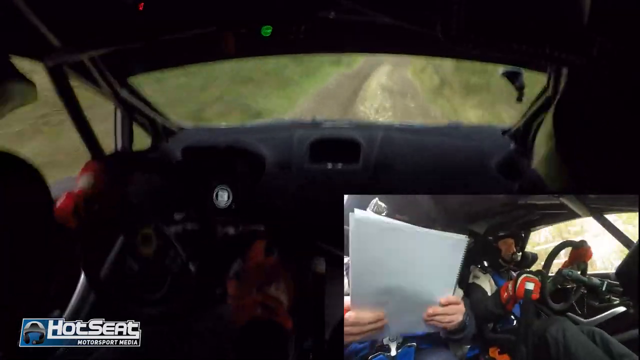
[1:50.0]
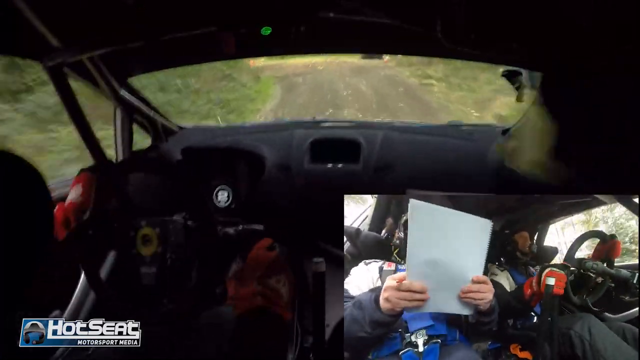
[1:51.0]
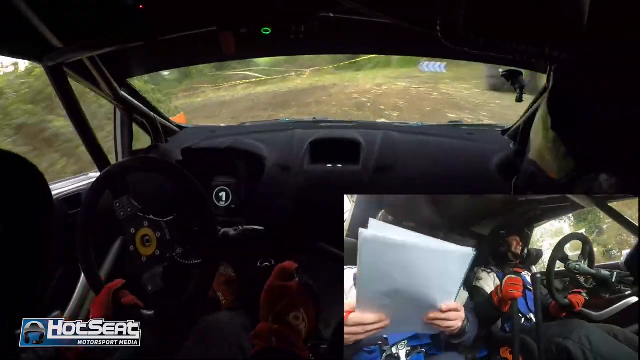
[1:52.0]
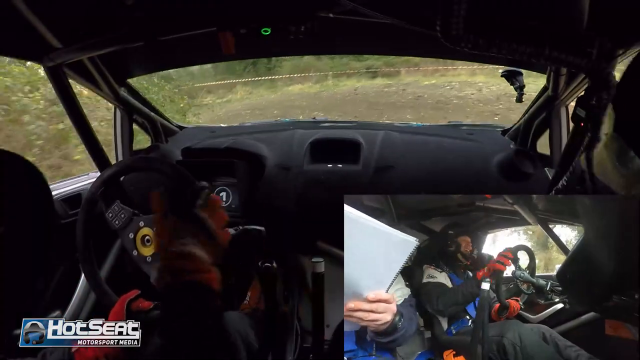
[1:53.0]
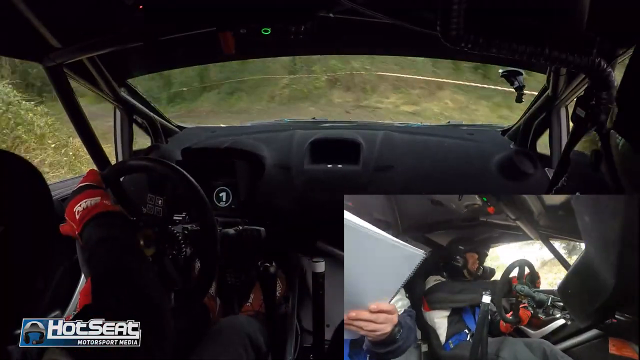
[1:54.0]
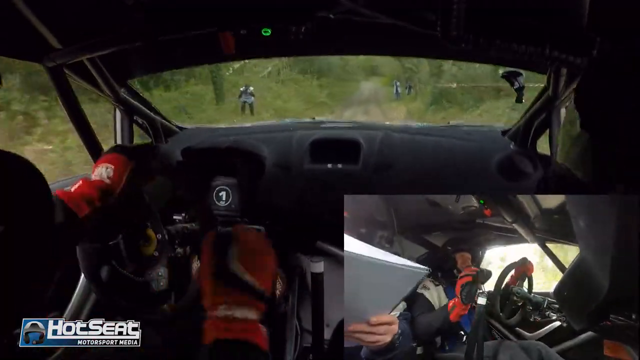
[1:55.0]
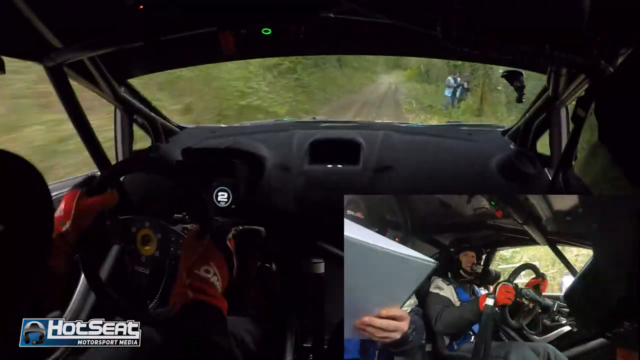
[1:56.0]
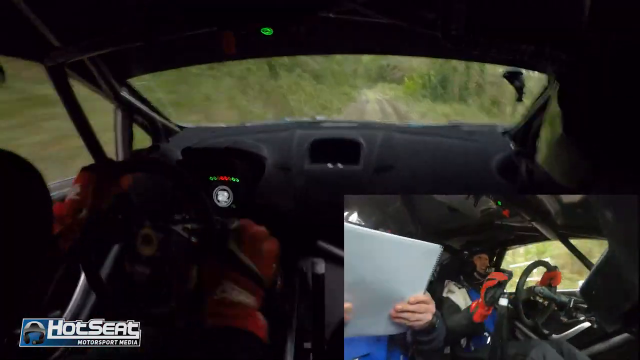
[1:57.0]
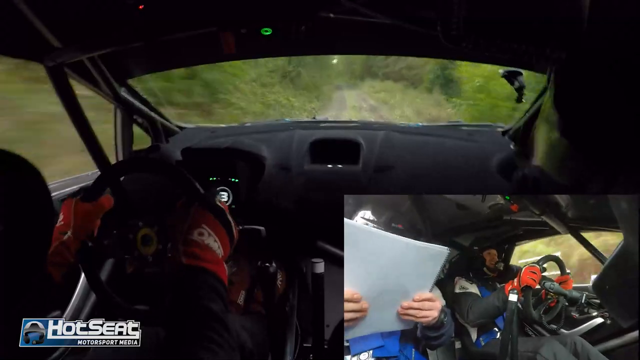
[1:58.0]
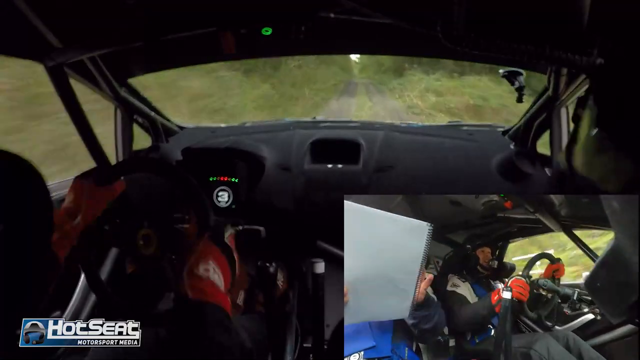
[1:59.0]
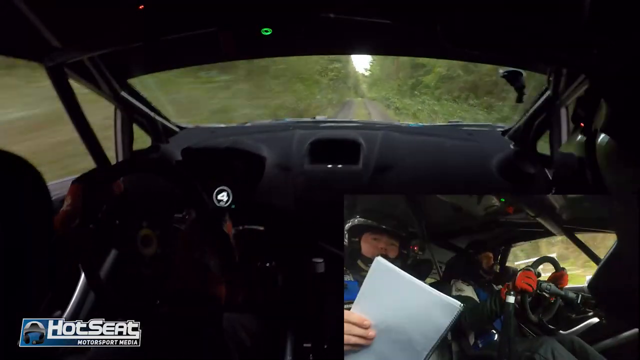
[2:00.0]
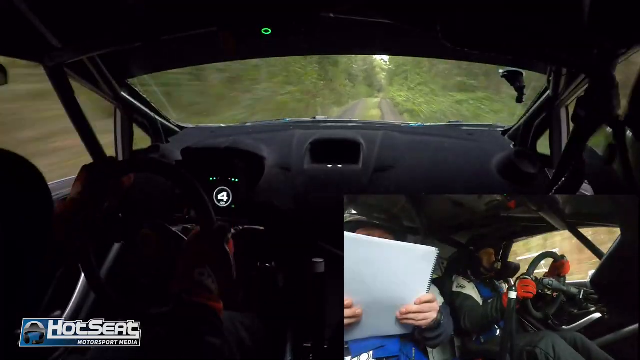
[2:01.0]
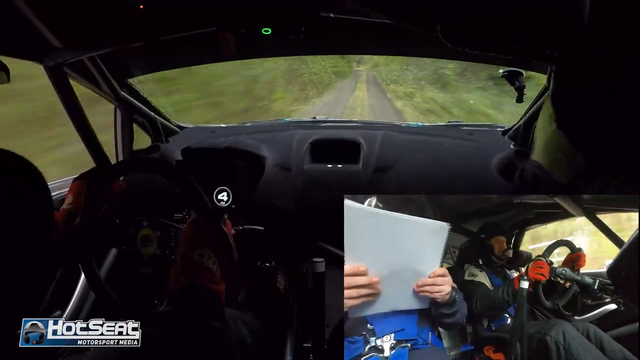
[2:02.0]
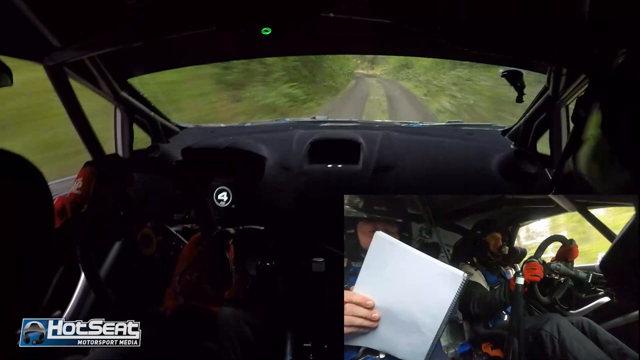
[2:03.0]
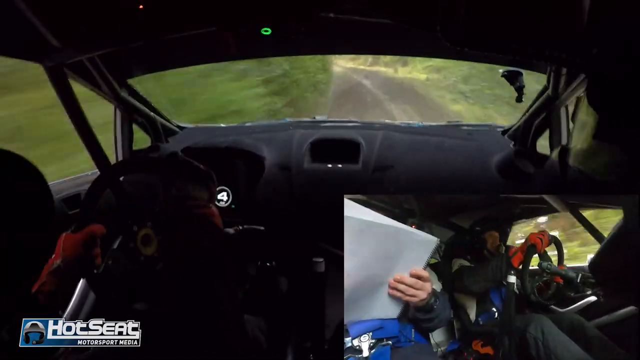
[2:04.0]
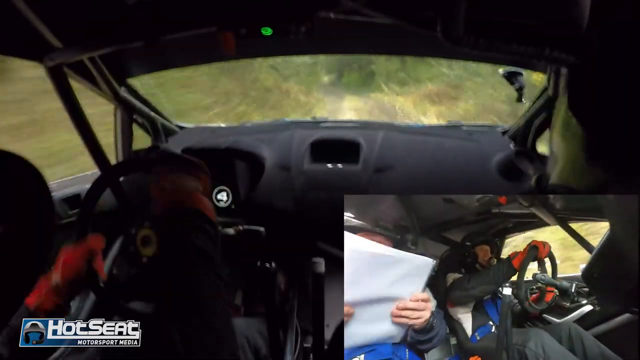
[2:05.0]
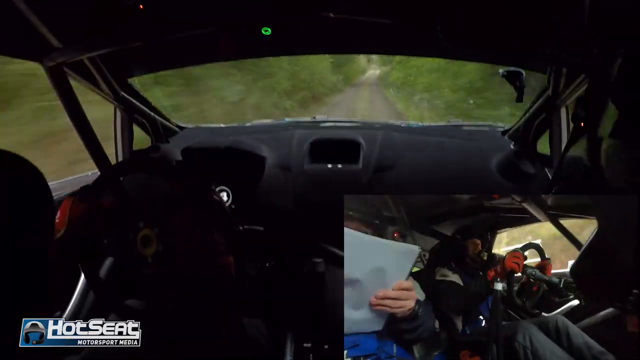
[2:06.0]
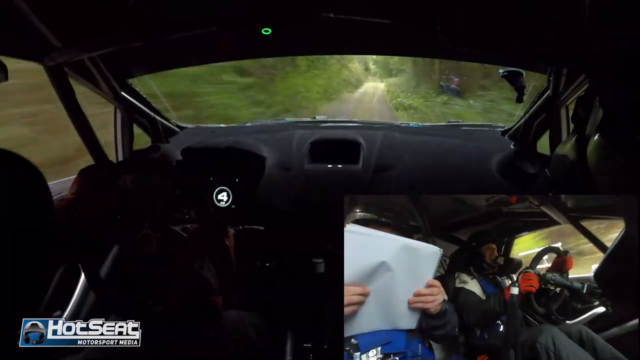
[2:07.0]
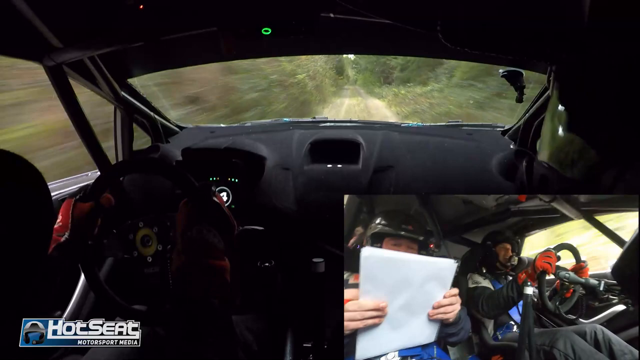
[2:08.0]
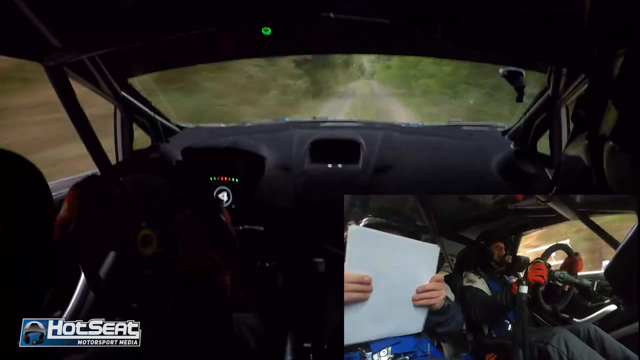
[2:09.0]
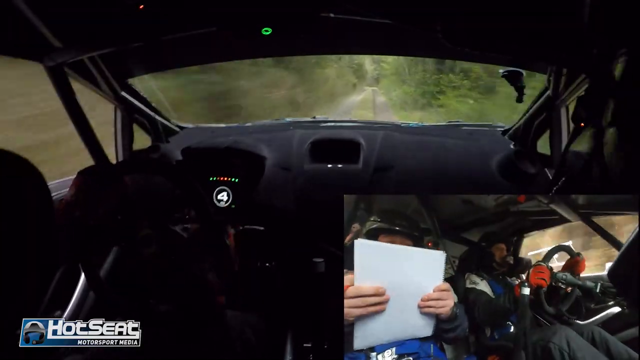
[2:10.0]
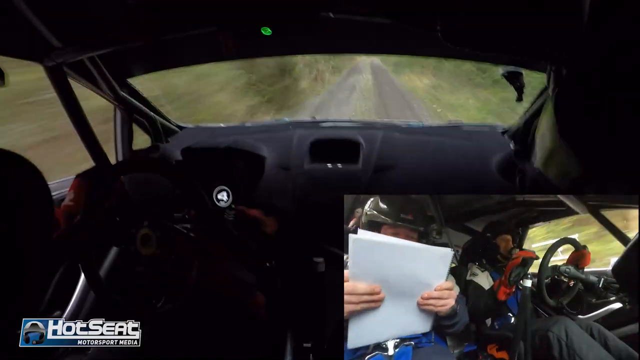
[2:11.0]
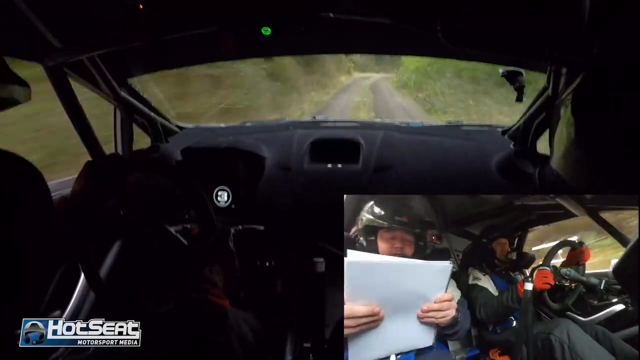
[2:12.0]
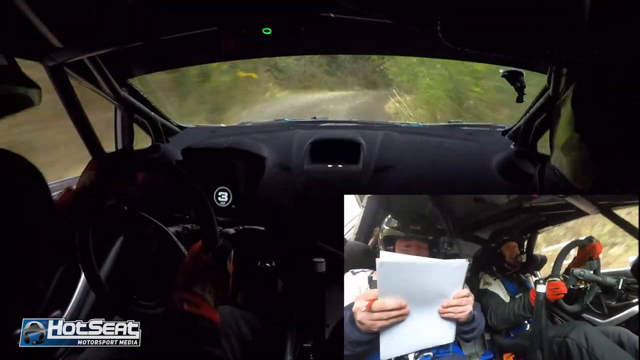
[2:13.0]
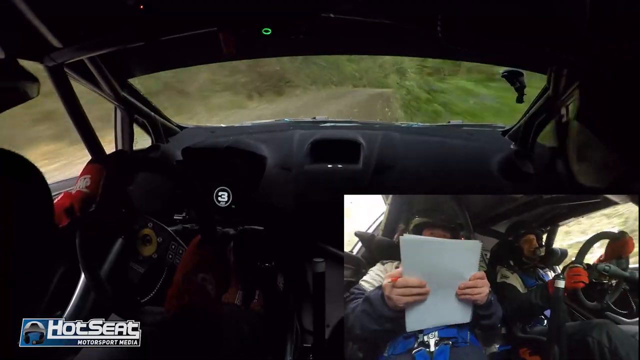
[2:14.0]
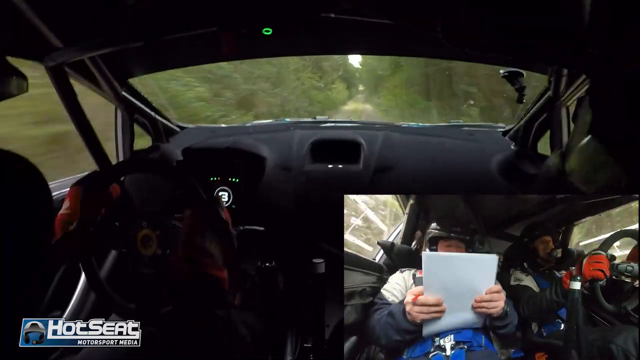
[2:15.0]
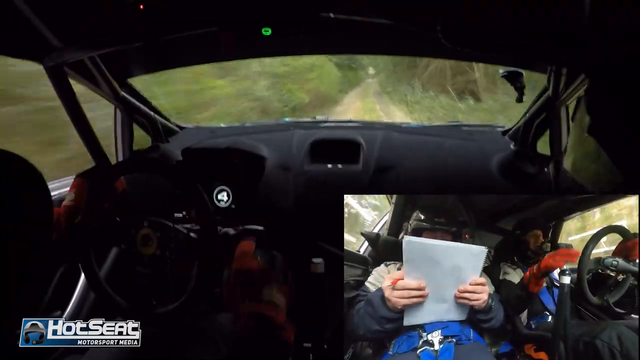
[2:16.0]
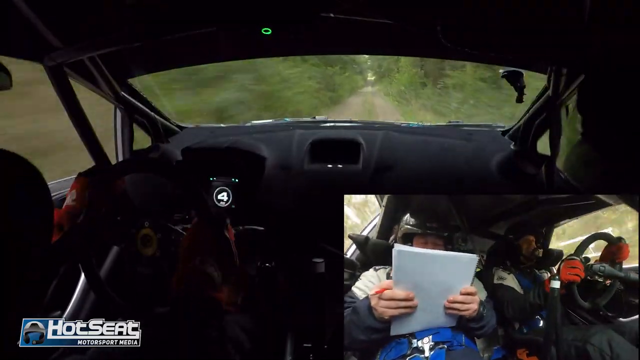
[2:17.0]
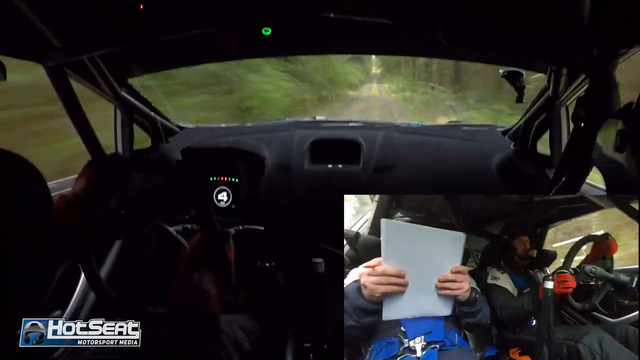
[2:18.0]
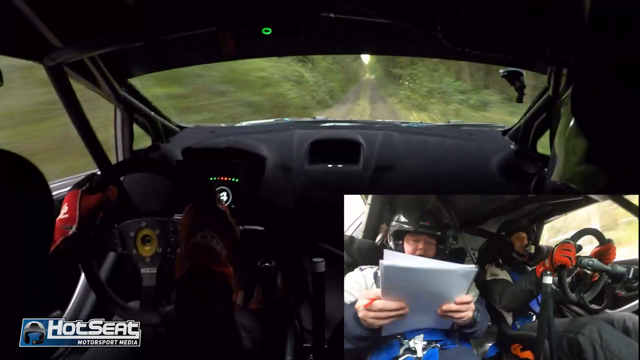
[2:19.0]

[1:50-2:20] The two men continue driving. There is some type of barrier, which almost looks like a pole, and objects that almost look like construction objects appear at the side; it remains unclear whether this is a motocross track or a dirt road in a rural area. People are seen working: in one image two men stand off to the side, one on each side of the road, apparently wearing baby blue light vests. As the car drives down the road, the trees get closer and closer and the vegetation seems to get denser, then in parts less dense. In the interior view nothing has changed: the passenger still holds the paper, and the driver takes his hands off every few seconds to move two sticks around.